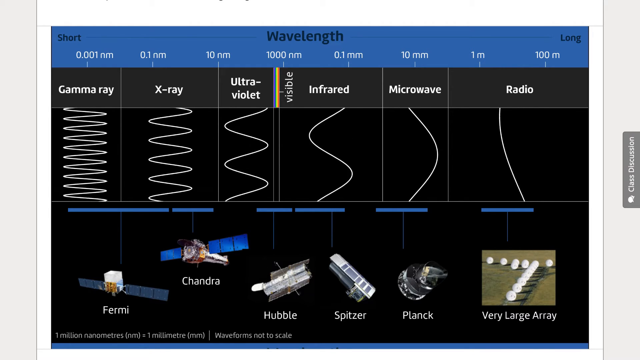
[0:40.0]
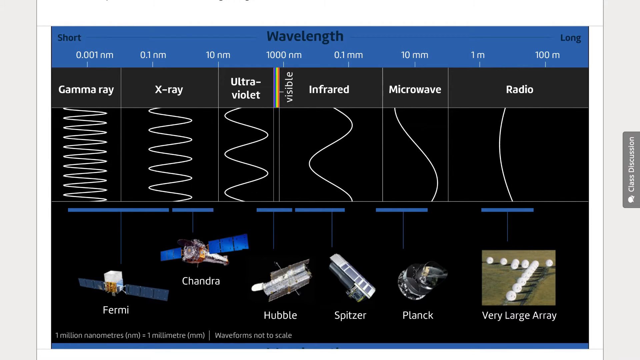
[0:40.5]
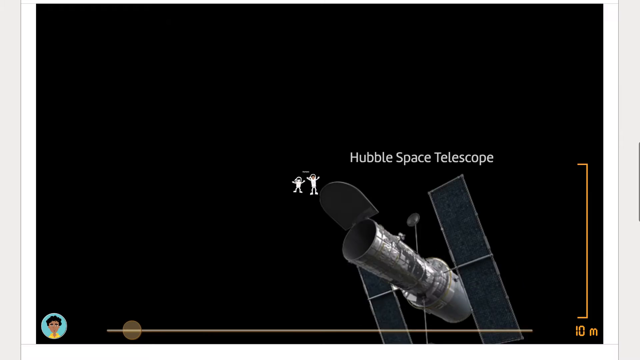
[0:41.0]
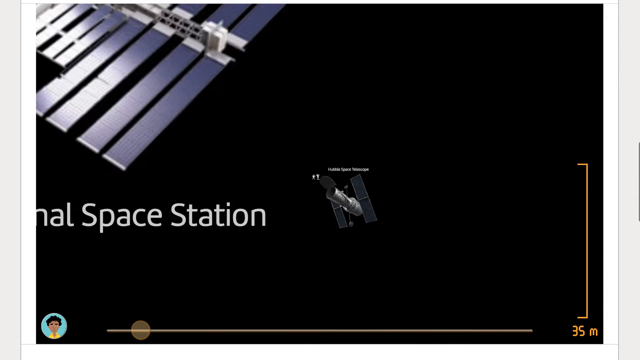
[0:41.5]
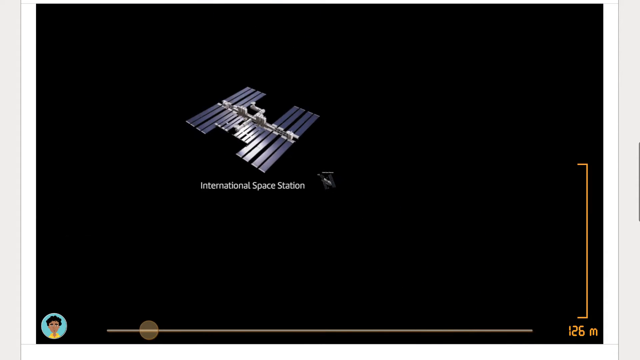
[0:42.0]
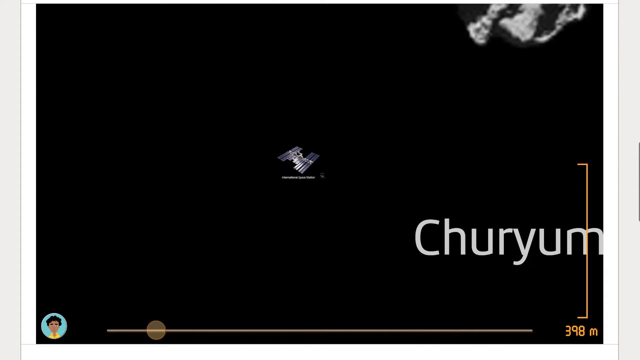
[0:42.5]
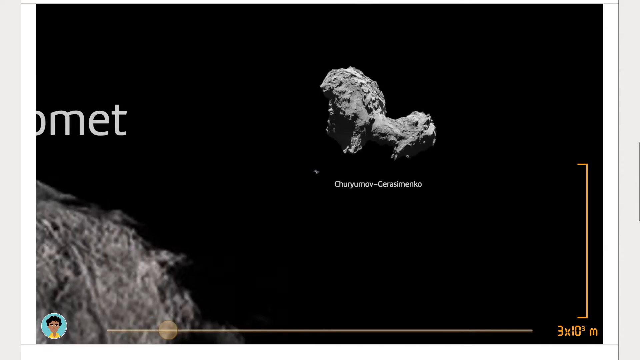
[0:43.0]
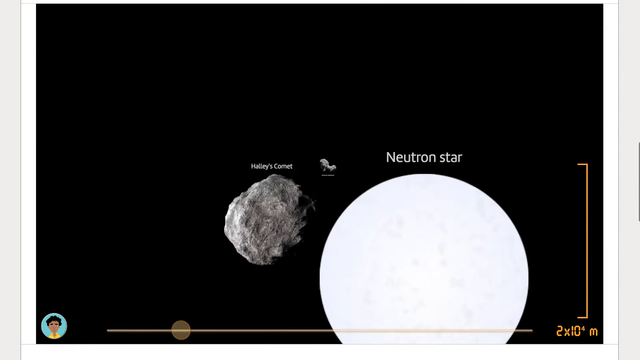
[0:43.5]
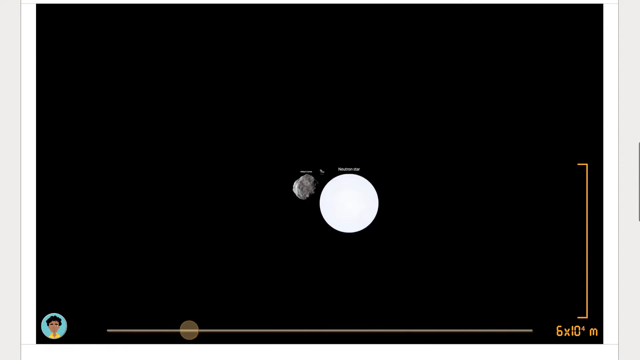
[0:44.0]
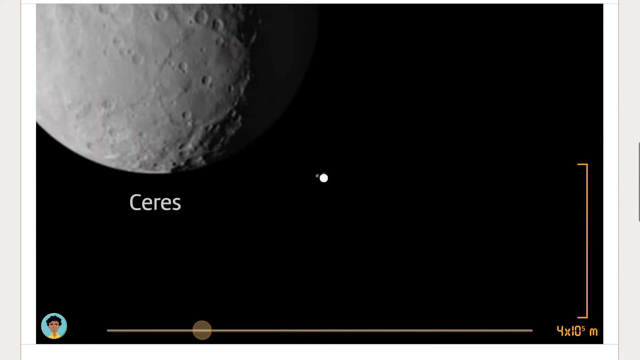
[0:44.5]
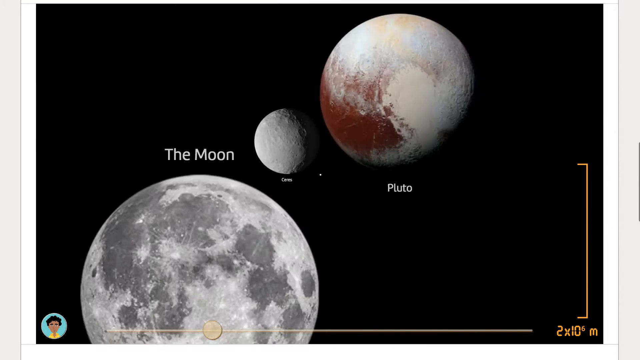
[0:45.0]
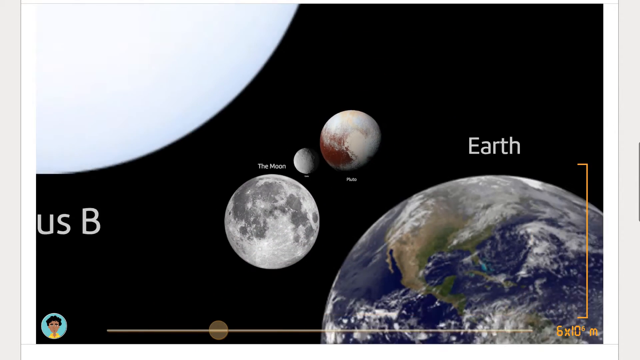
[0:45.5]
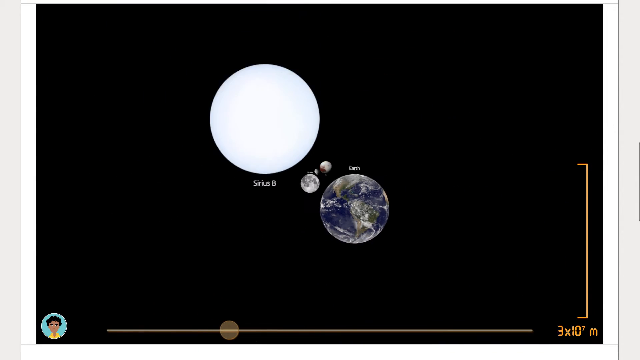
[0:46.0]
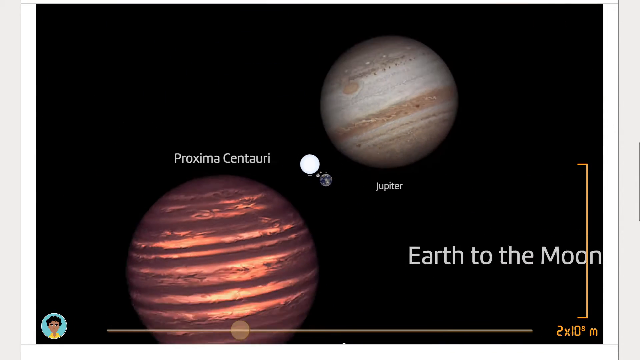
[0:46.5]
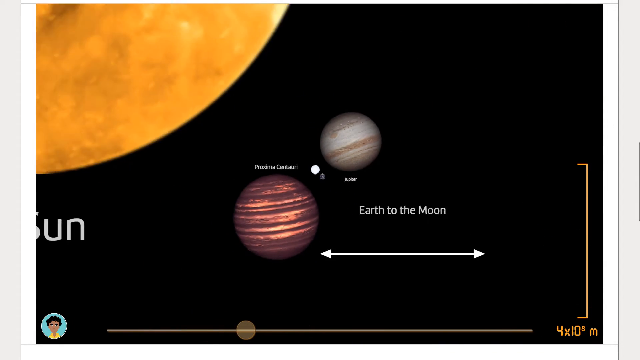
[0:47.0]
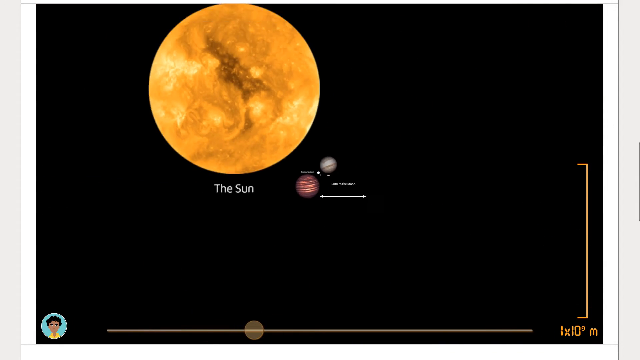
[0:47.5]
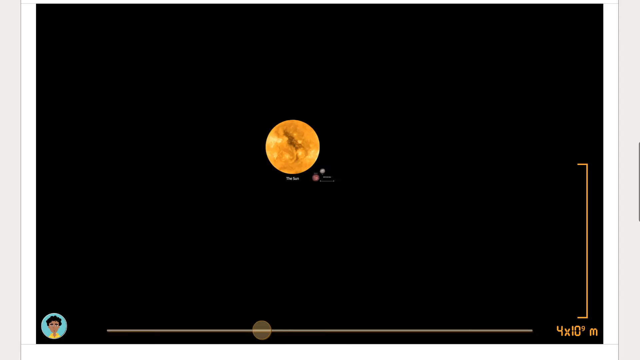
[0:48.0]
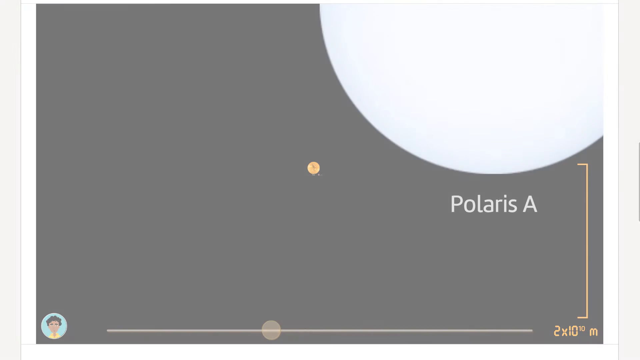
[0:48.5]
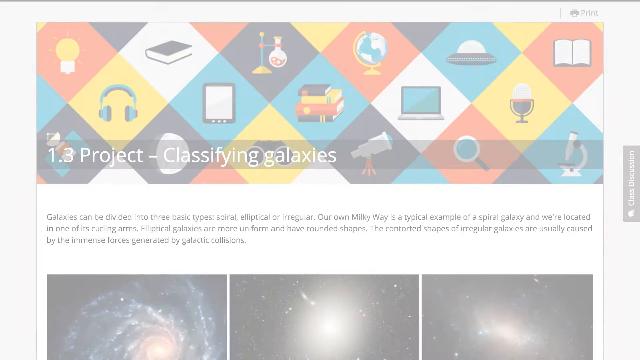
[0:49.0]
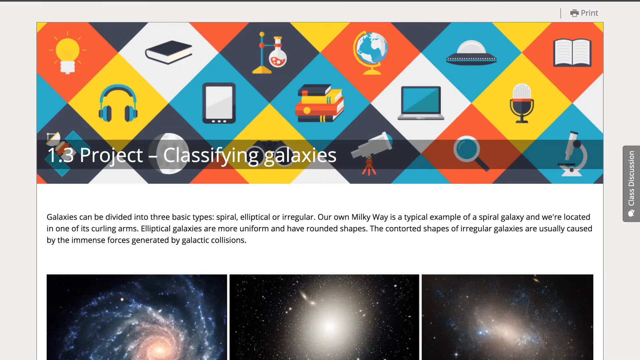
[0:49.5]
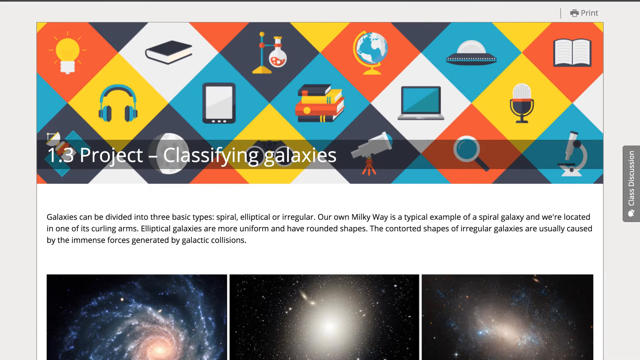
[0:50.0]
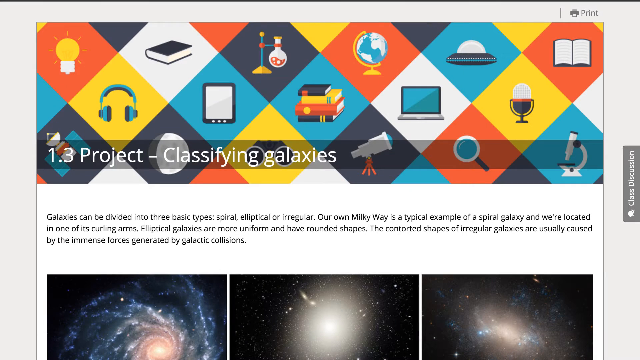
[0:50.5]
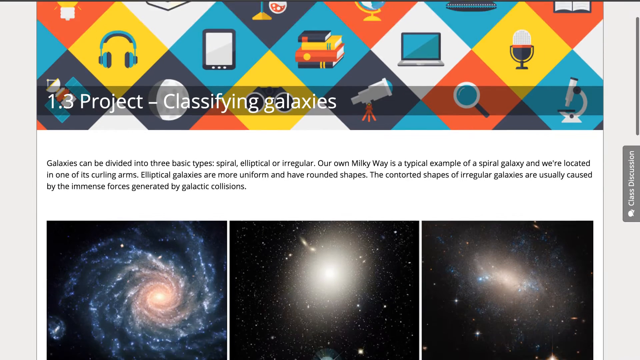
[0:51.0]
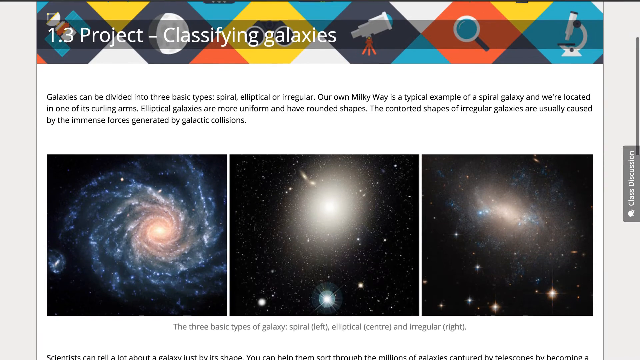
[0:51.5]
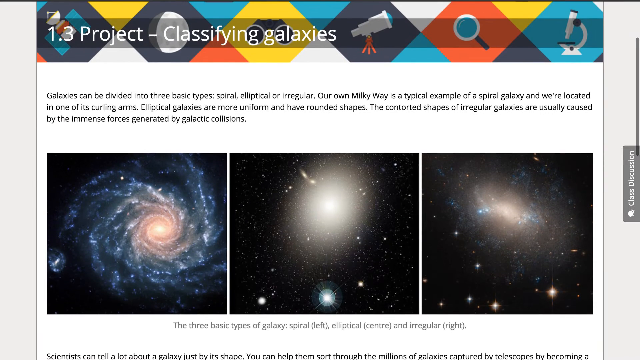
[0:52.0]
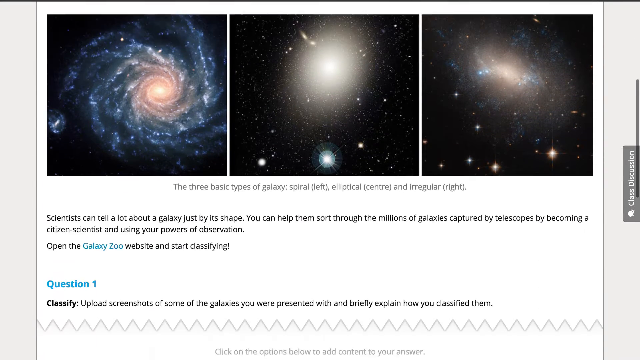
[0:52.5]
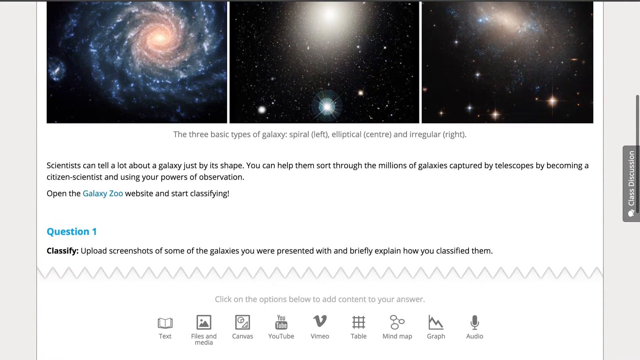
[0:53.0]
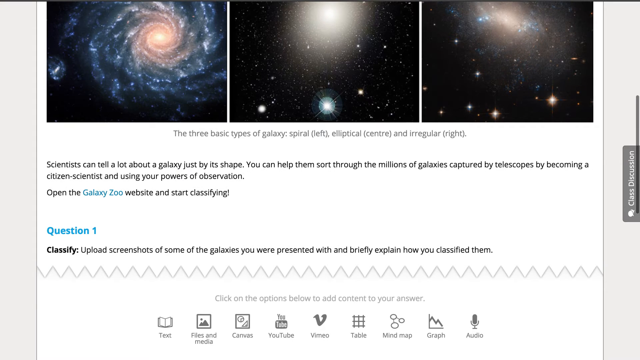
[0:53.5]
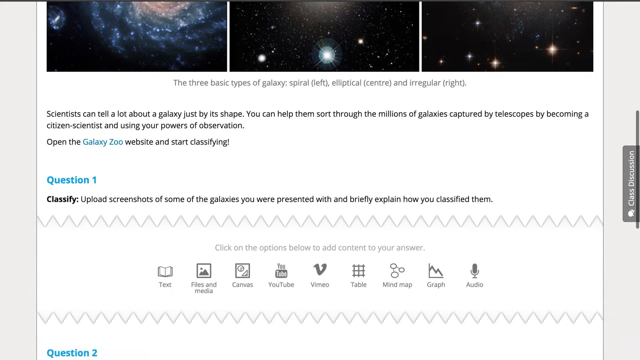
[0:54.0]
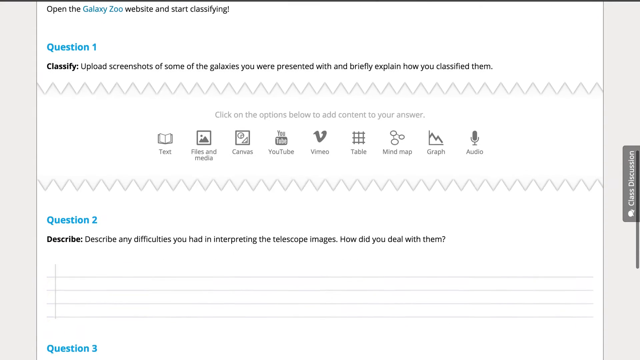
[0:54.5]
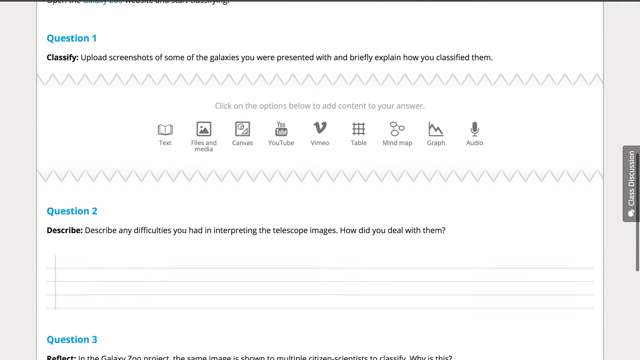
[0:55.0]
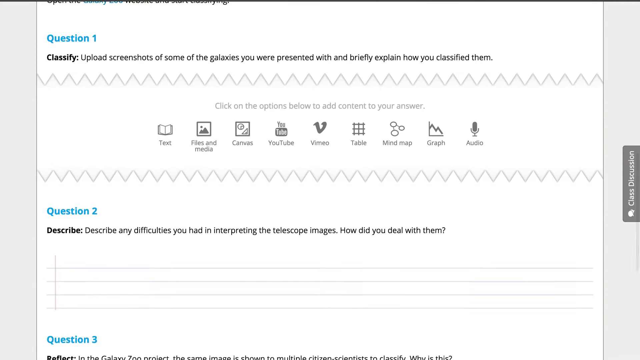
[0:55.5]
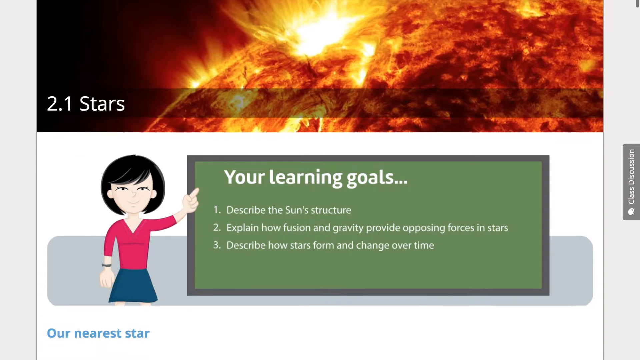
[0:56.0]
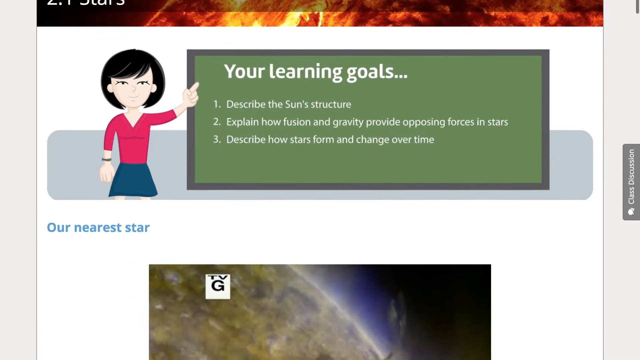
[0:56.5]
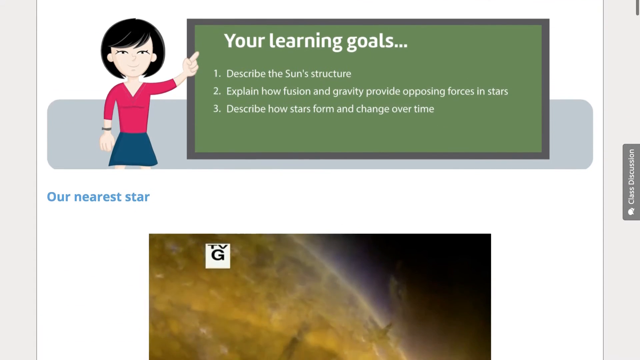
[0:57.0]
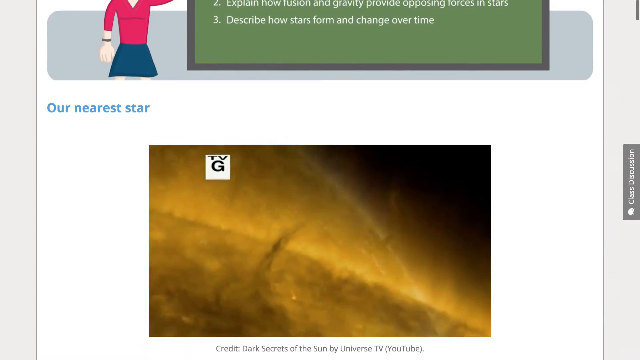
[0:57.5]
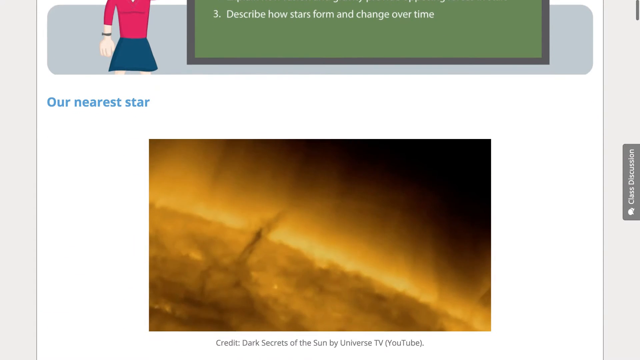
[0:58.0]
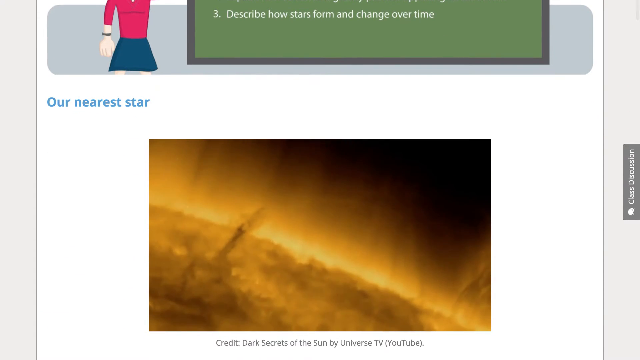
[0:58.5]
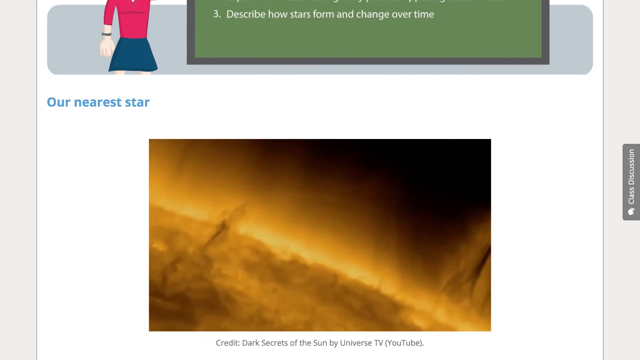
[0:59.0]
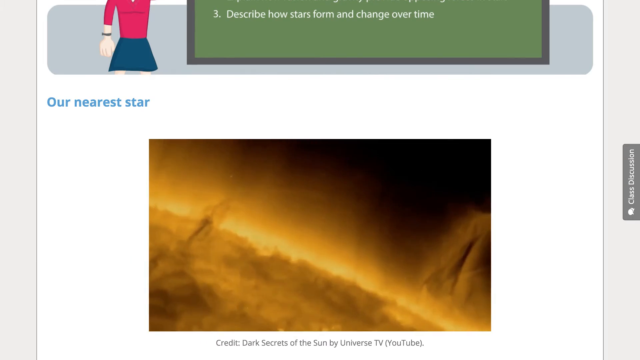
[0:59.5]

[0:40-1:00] A video of sorts shows the different satellites and planets. It first shows a number of satellites, then what looks like an asteroid, a big star, then Pluto, the moon, the earth, Cyrus B., Jupiter, the moons of Jupiter and the sun. Next comes the first project, 1.3, on classifying galaxies, which appears to describe the different types of galaxies. Its first question says "upload screenshots of some of the galaxies you were presented with and briefly explain how you would classify them," apparently a task for the students. A page of goals follows.